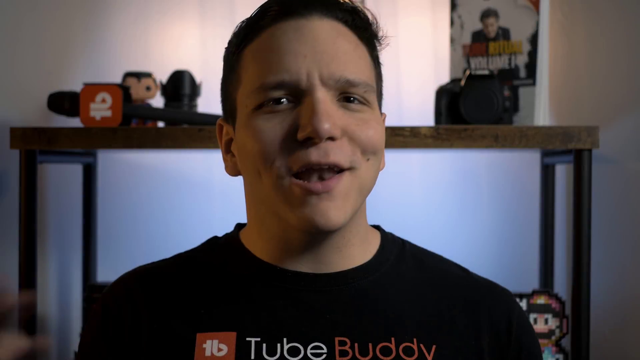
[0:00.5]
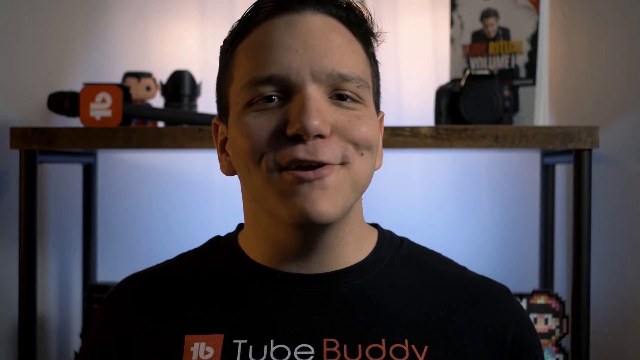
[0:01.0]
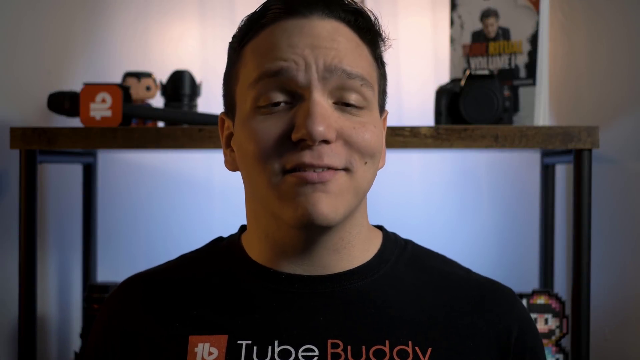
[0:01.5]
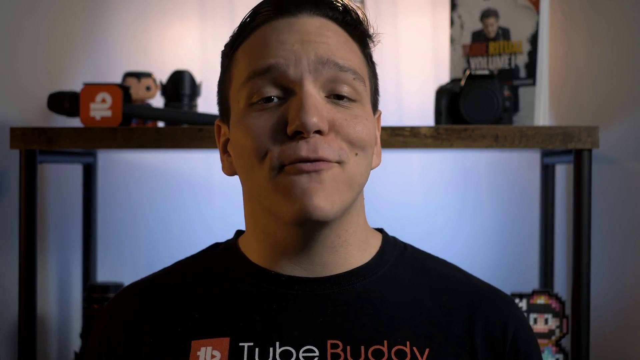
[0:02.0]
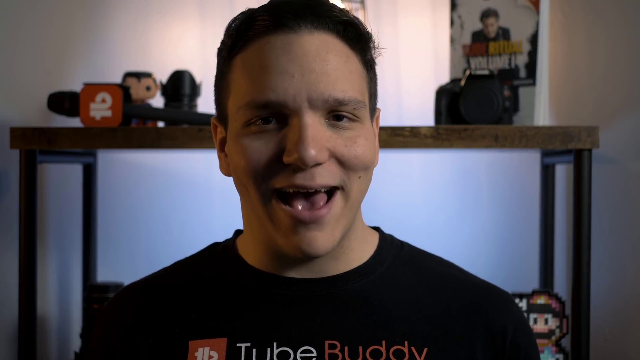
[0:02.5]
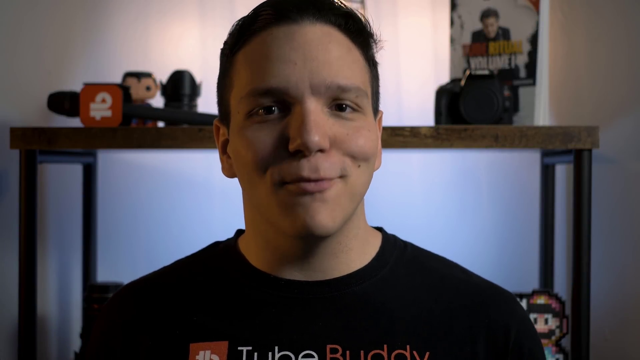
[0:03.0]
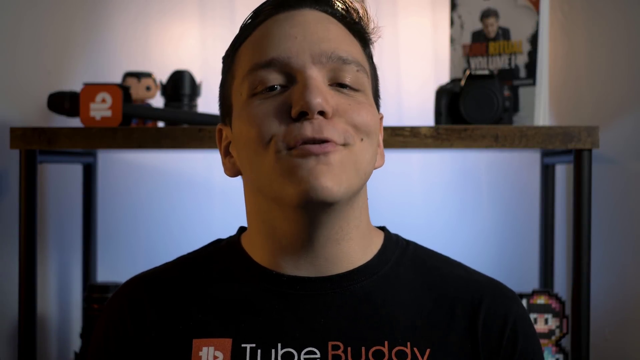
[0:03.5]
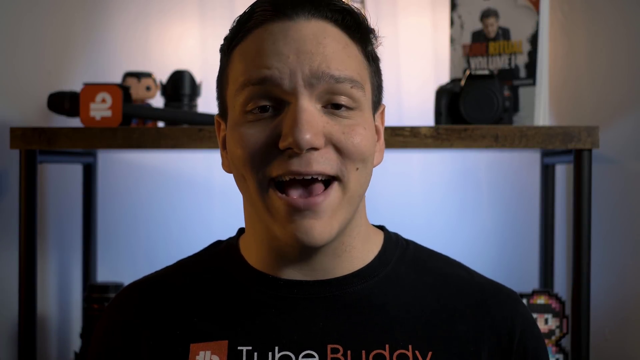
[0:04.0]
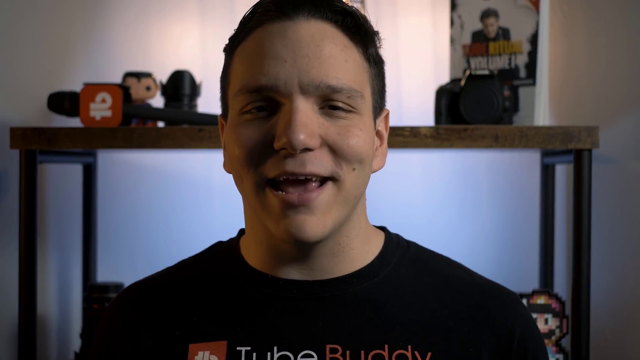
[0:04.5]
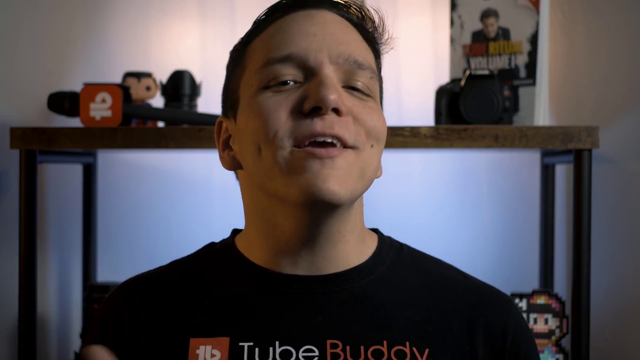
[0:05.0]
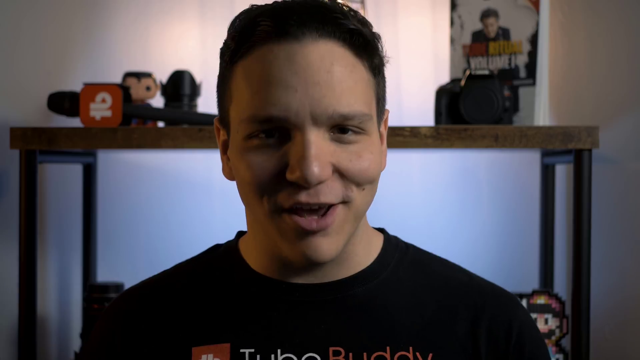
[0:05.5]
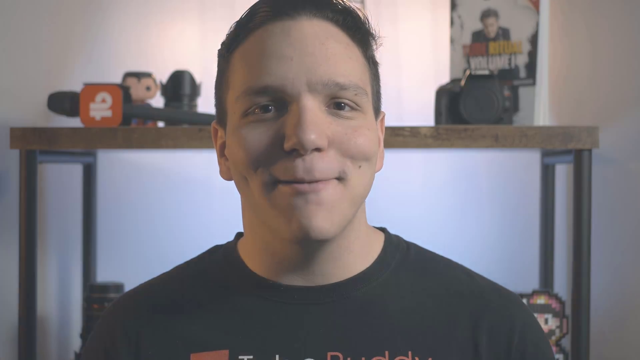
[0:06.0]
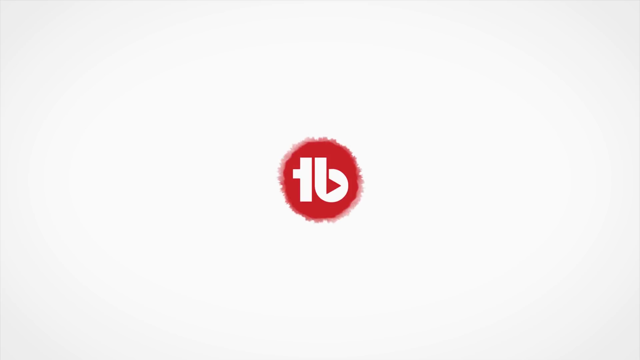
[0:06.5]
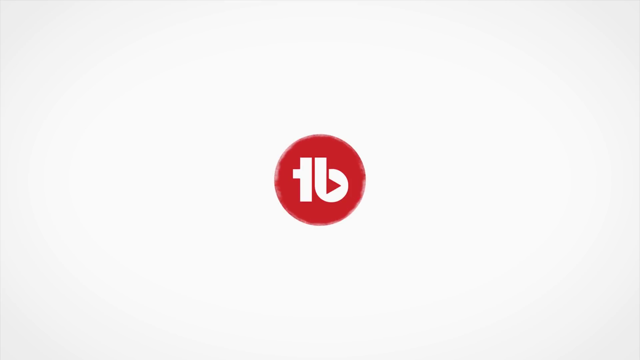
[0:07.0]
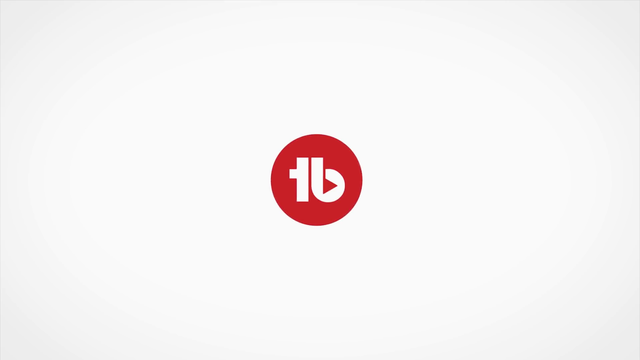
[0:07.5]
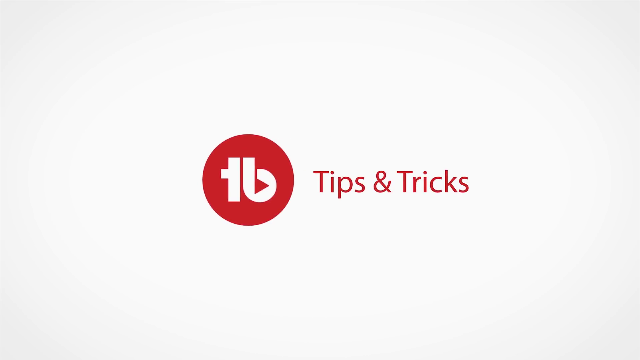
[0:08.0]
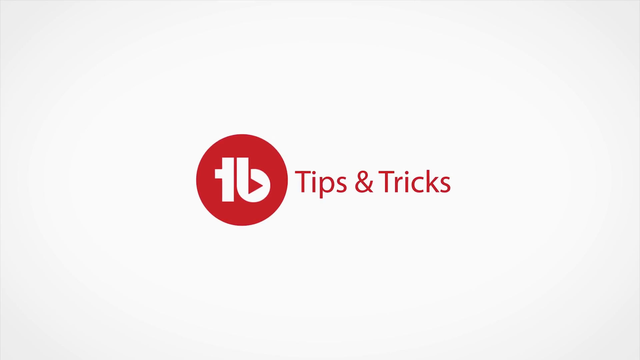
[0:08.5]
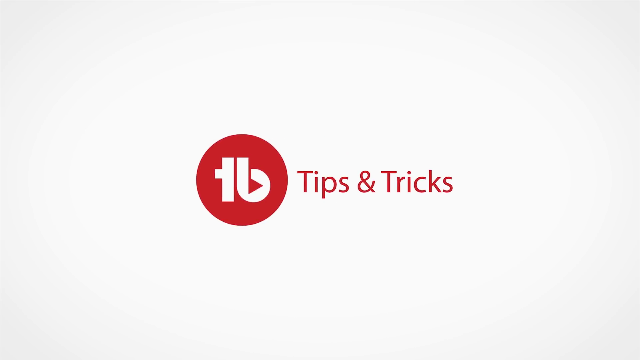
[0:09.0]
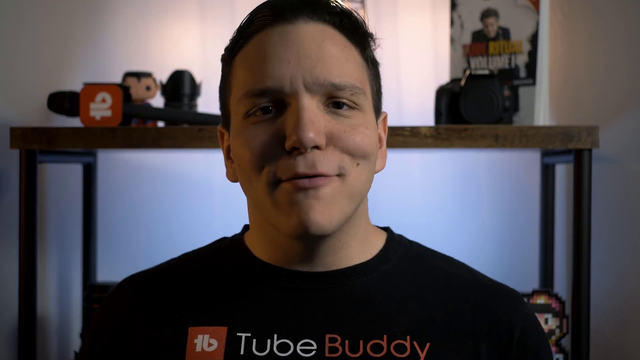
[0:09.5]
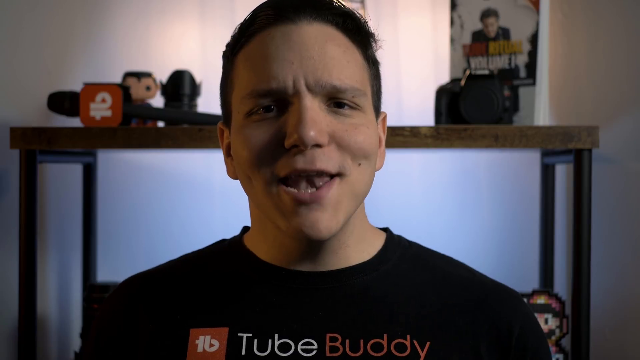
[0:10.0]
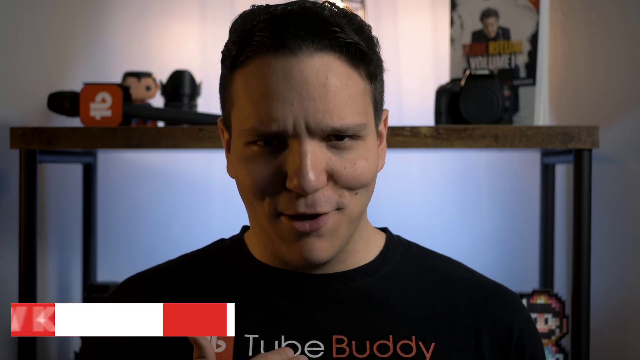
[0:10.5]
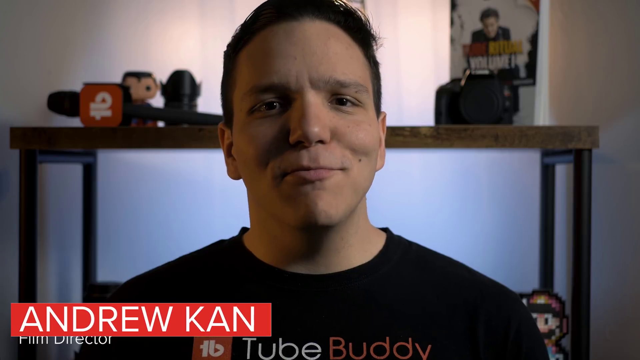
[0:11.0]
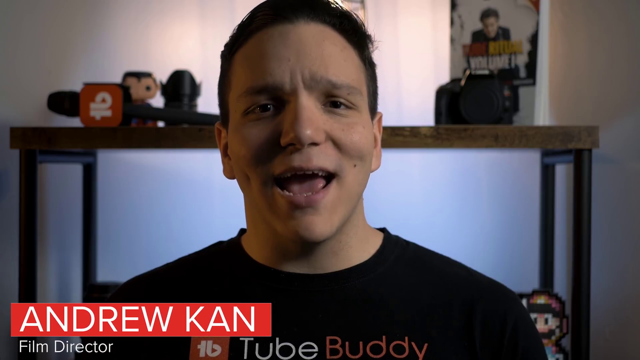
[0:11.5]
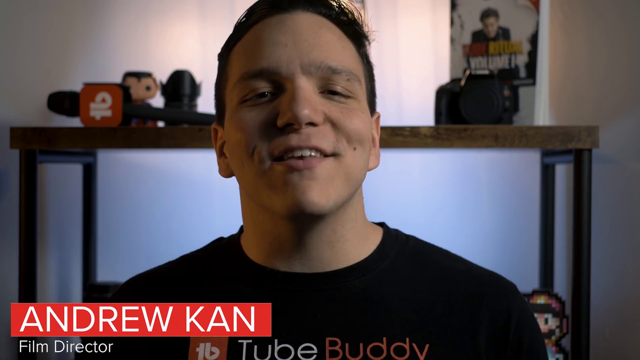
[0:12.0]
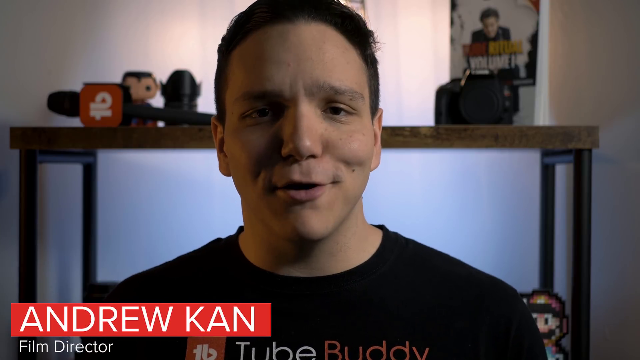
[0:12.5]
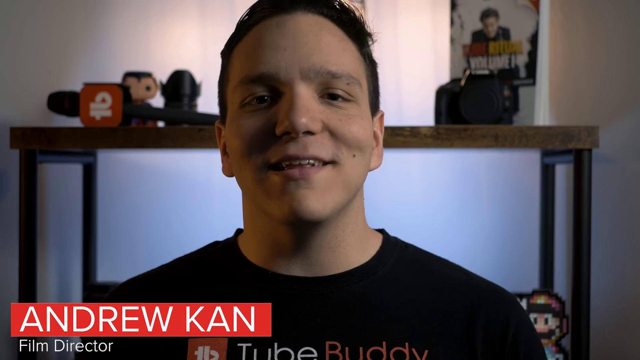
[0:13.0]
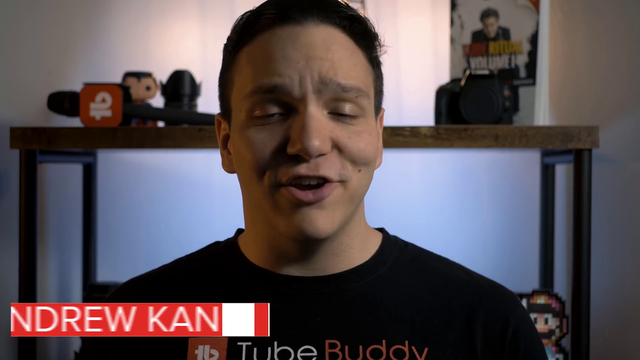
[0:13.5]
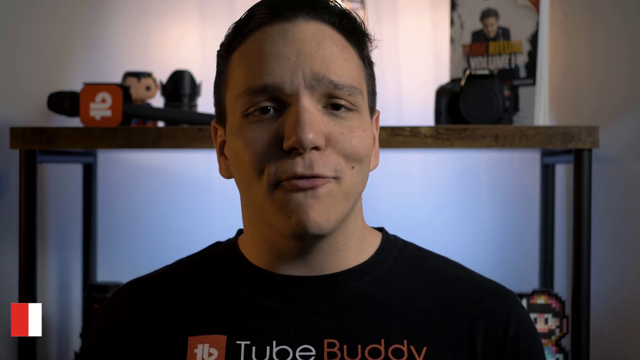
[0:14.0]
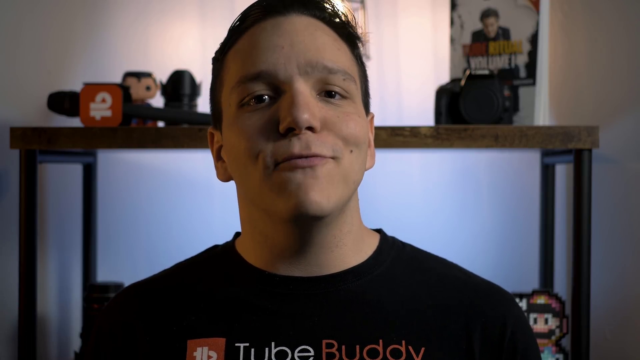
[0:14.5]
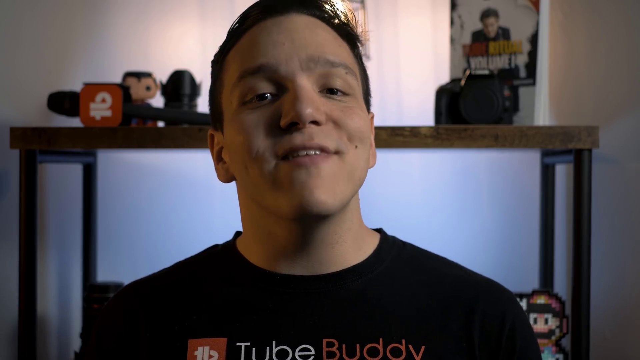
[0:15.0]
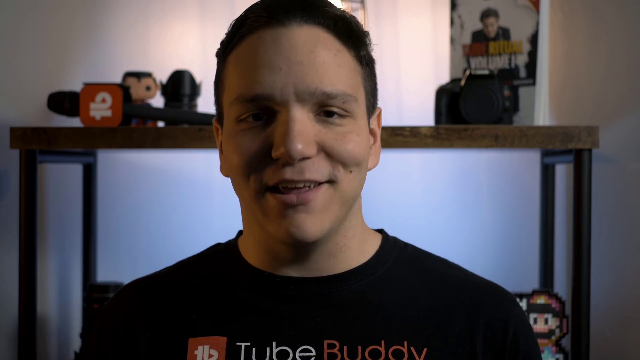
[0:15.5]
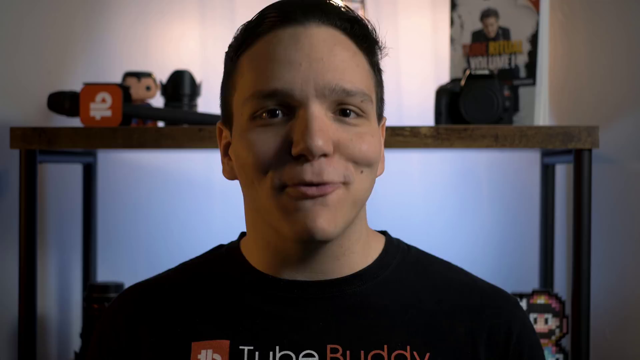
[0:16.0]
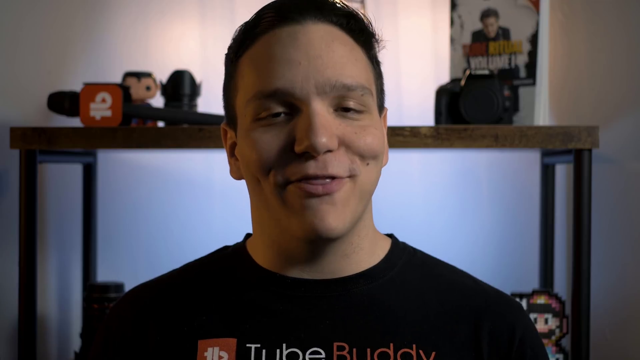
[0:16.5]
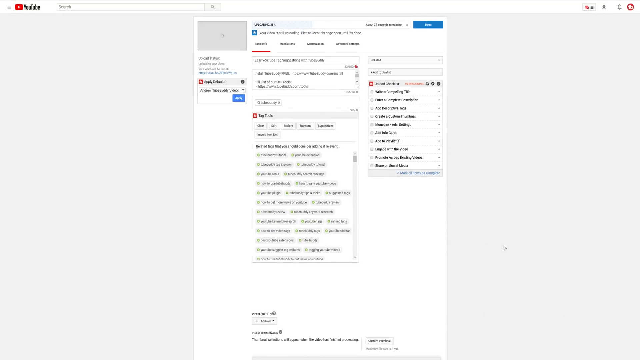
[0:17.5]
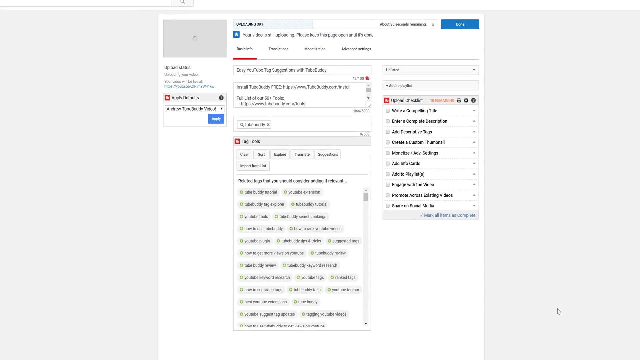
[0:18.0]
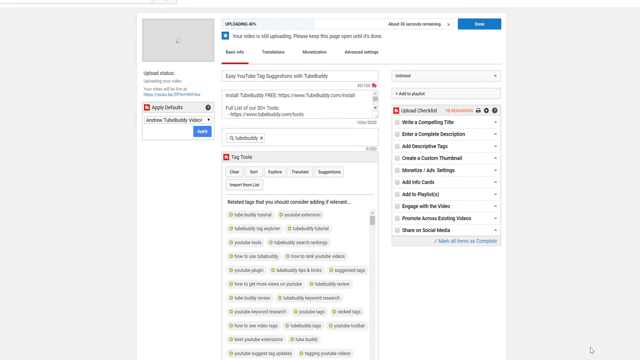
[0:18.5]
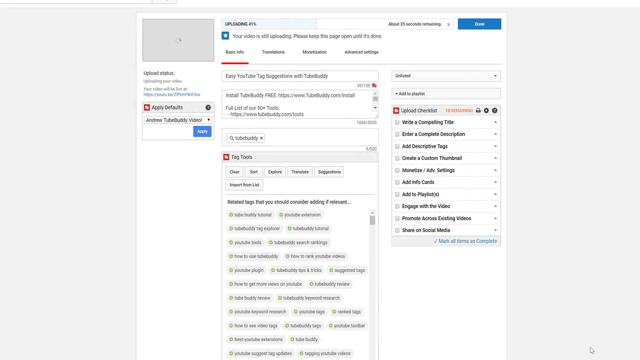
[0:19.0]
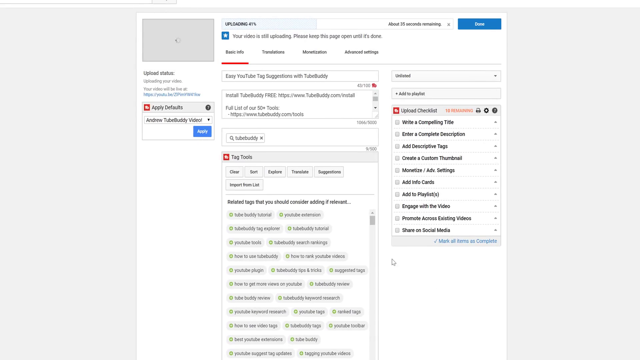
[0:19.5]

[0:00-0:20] A young man, probably in his 30s, wearing a plain black top appears on screen. Behind him are some items that are unclear but are probably some kind of merch; they are sitting on a brown table with black metal legs. The man is talking and looks very enthusiastic and happy, putting a lot of expression into his speech. A logo comes up with "tips and tricks" in red, and a circular animation returns to the shot of the man, where his name, "Andrew Kan", comes up as he continues talking. Next, a screenshot appears, zoomed in slightly: mainly a white screen with various text on it. It is hard to tell what the screen is about, so the topic of the video is not yet clear.